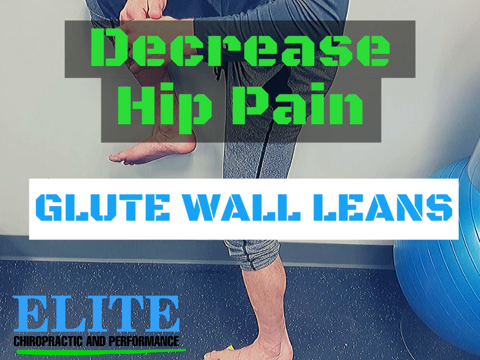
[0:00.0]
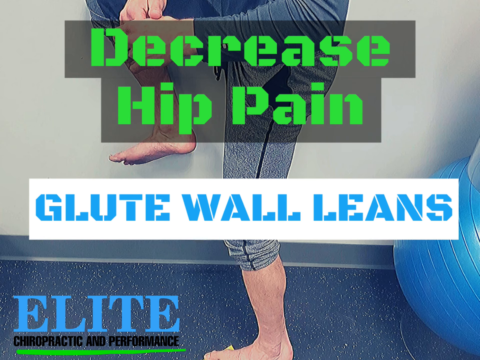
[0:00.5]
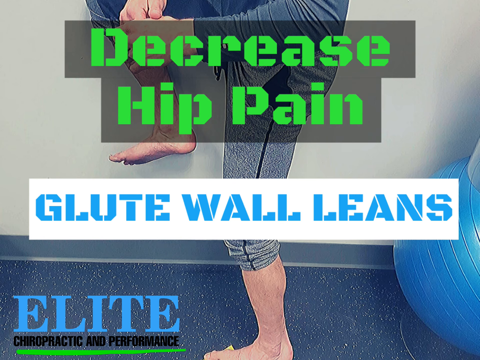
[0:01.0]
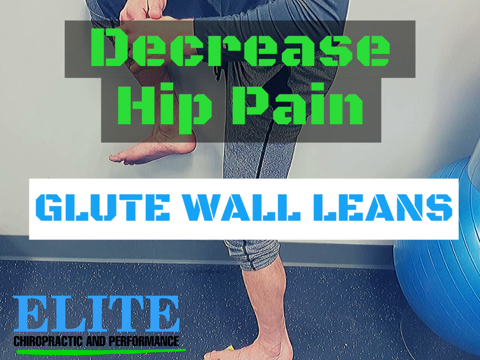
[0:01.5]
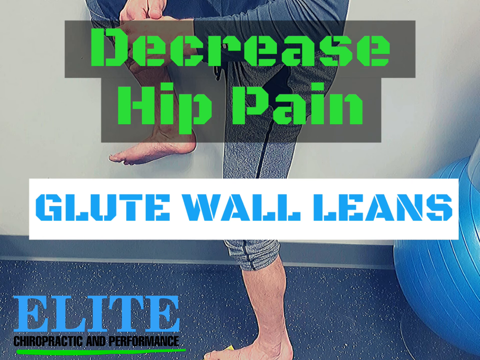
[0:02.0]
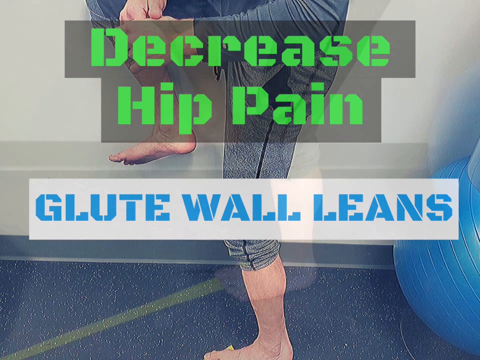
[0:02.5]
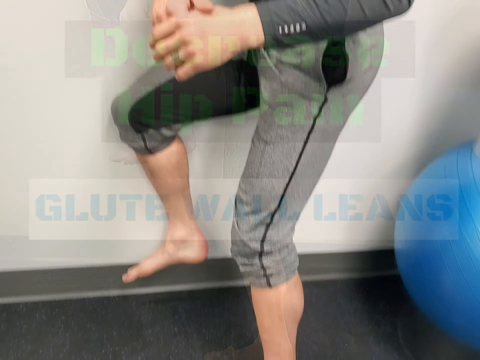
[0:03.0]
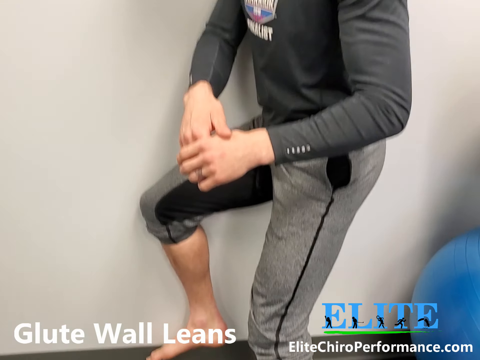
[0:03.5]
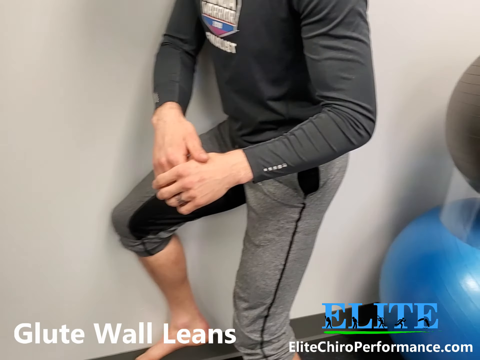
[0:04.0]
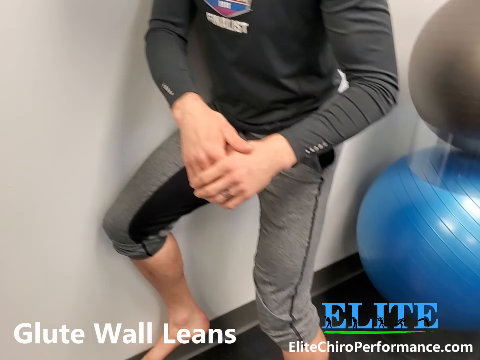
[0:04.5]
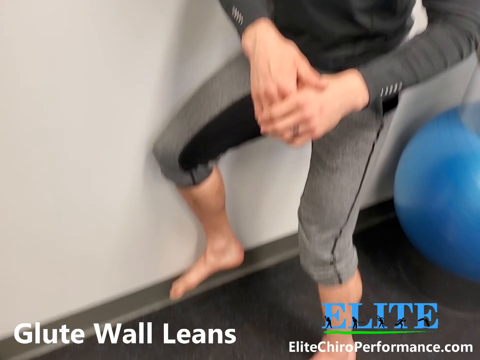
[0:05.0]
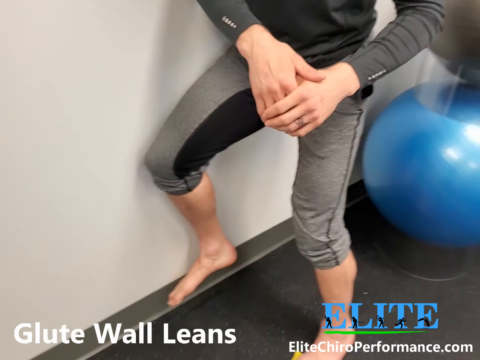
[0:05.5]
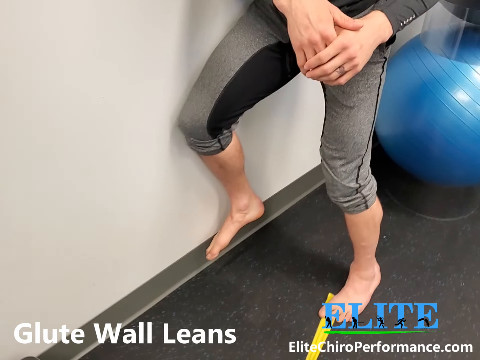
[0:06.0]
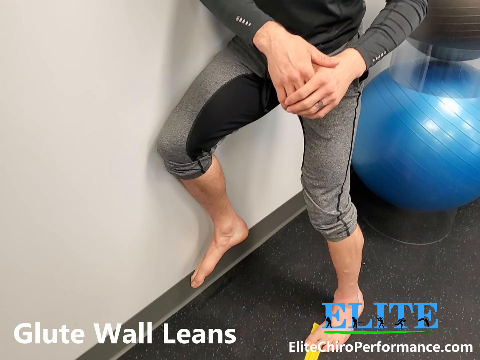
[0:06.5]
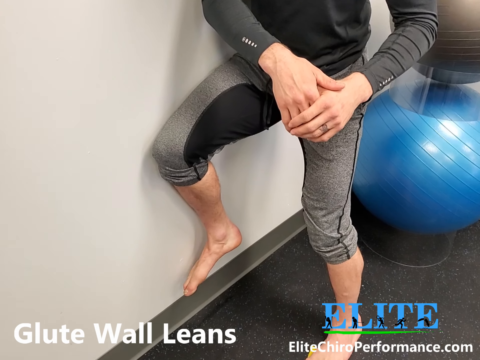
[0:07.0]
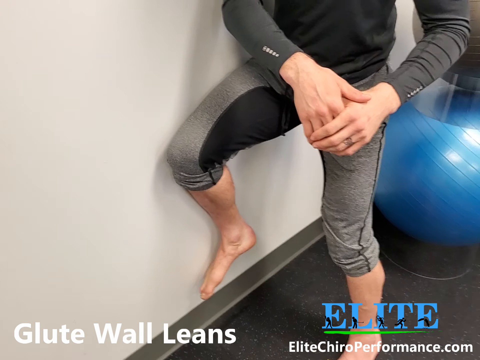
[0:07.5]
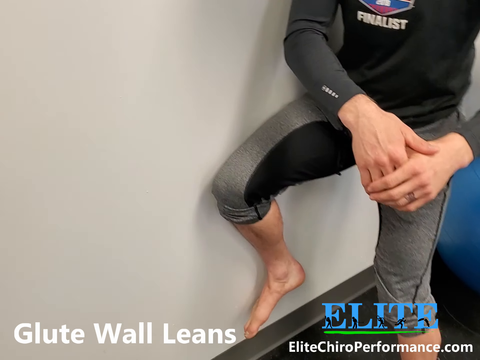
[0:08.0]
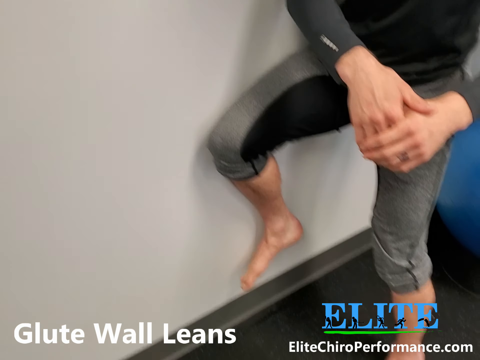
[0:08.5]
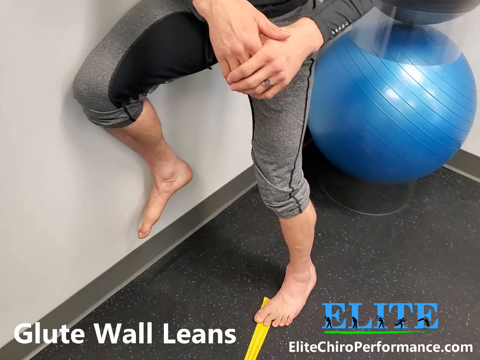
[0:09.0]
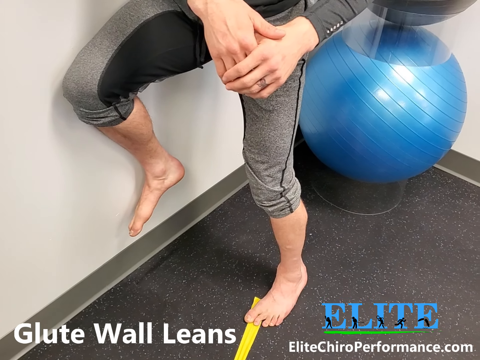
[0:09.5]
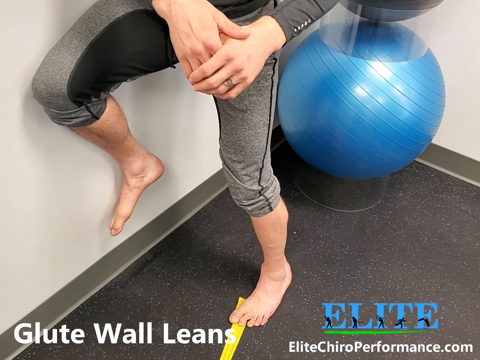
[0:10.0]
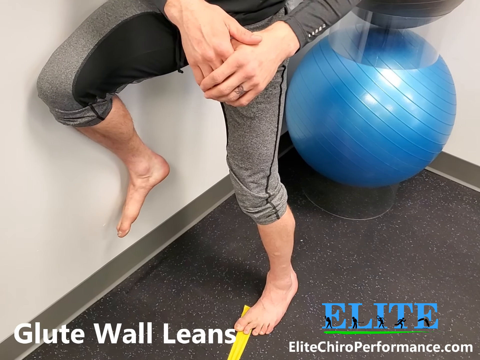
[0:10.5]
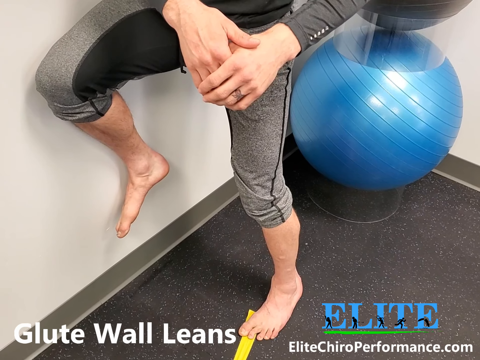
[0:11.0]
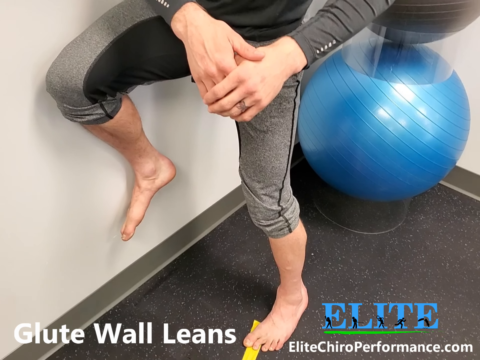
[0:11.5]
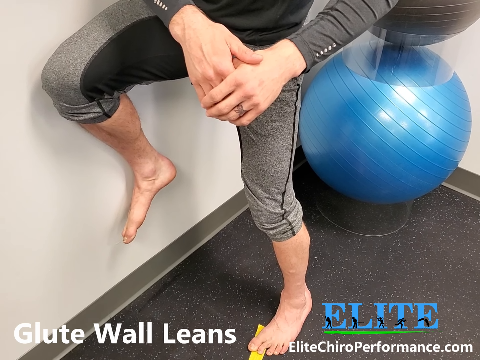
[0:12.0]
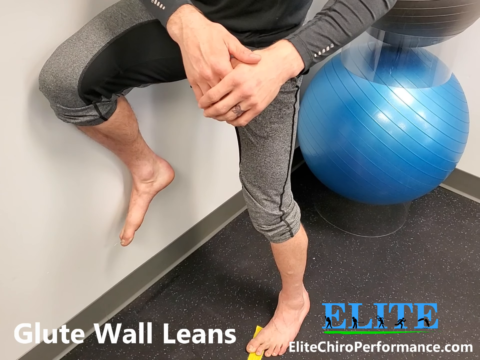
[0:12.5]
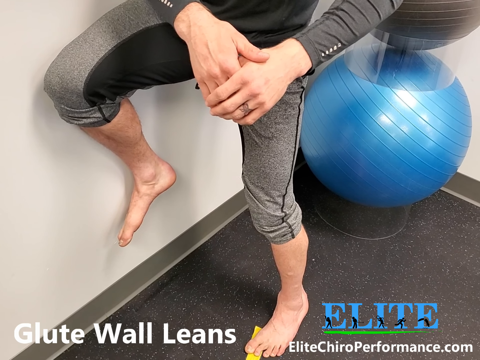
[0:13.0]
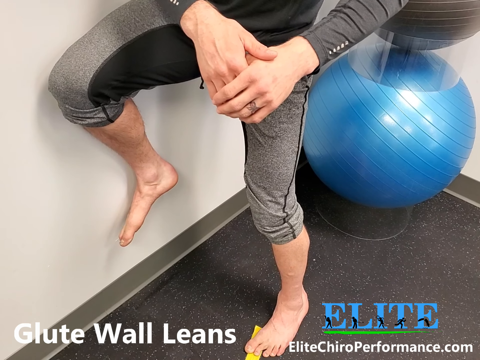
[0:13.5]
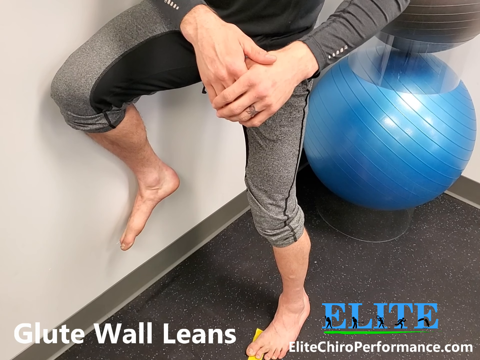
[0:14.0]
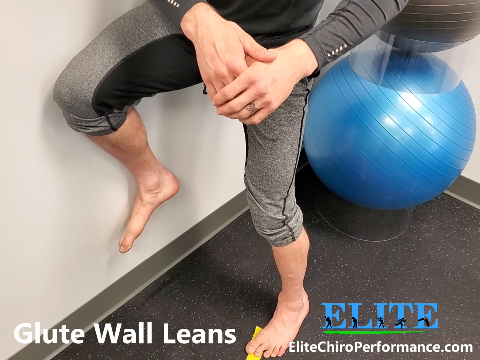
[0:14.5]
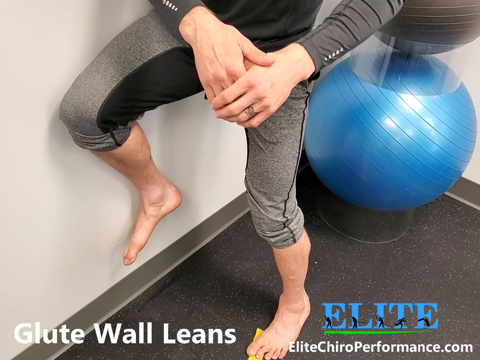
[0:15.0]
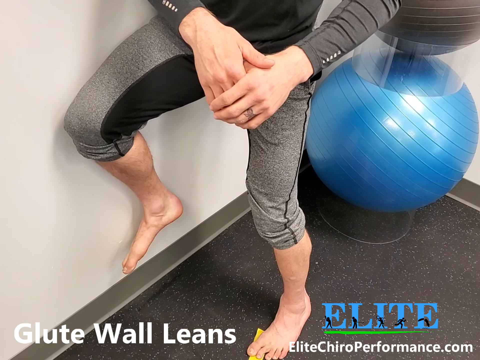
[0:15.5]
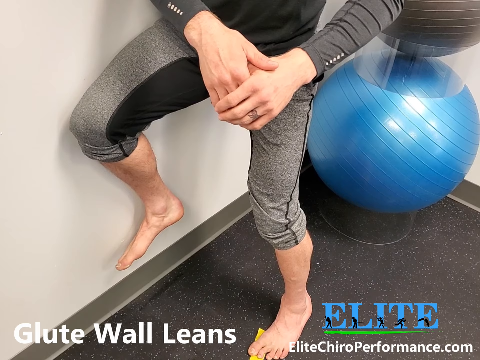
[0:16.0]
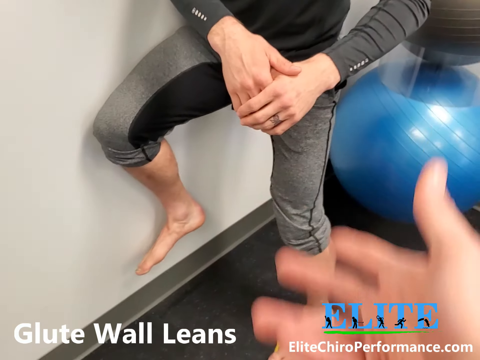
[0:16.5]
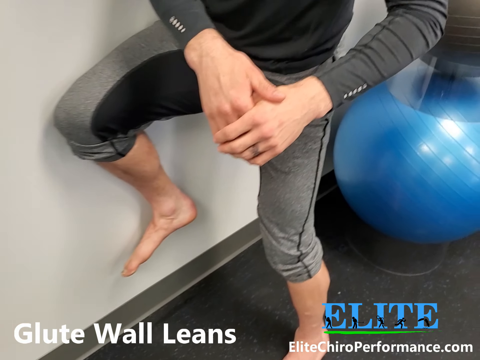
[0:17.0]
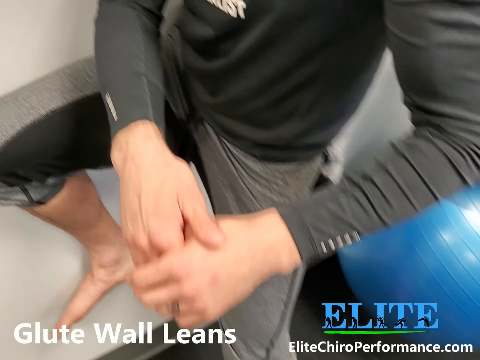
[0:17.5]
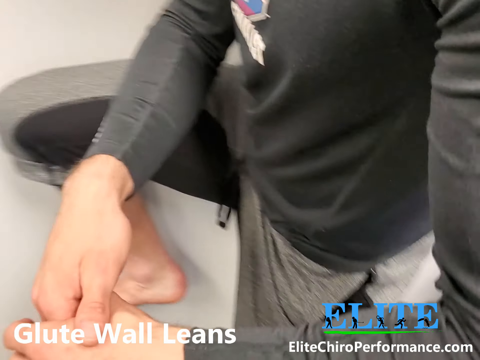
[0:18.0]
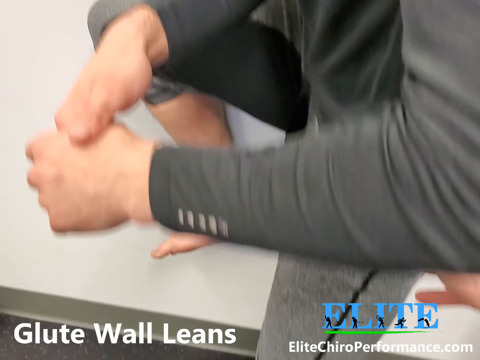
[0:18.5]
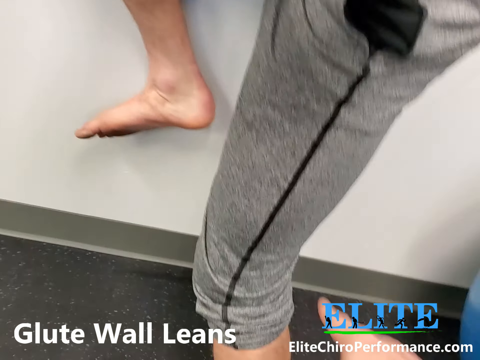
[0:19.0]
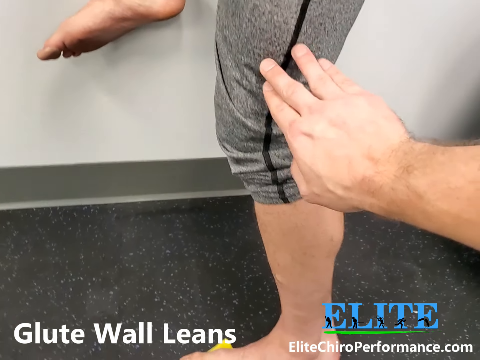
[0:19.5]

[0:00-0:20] The video concerns an exercise related to hip pain. At the beginning, green text at the top reads "decrease hip pain", below it is "glute wall leans", and at the bottom left "elite" appears in blue. It then goes into a video of a person seen from about the waist down. Their hands are clasped together, and they wear a kind of gray outfit with long sleeves and sort of sweatpants rolled up almost to their knees. They are barefoot, with their right leg touching a white wall and their knee up on the wall as well, and they keep moving it up a little bit along the wall. The camera moves from the left and then to the right. A big blue exercise ball is behind the person, and the ground is black. For just one second a hand comes up in the bottom right corner, kind of gesturing towards the person doing the exercise. The camera then kind of zooms in and moves closer to the person, and the hand points to the person's left leg and sort of touches the side of their knee with the right hand.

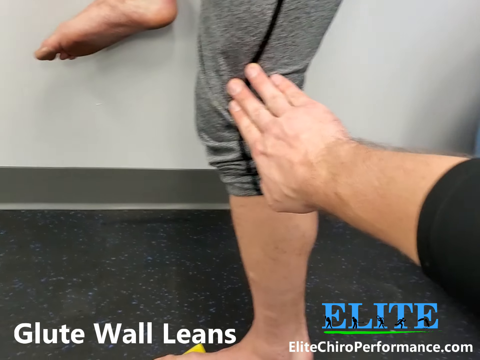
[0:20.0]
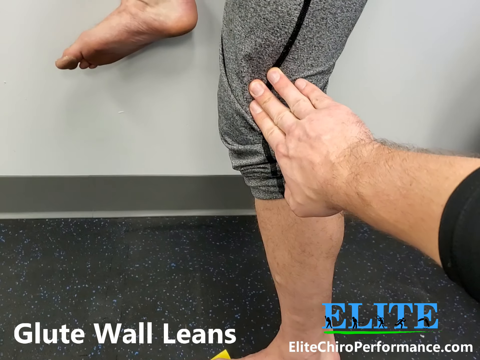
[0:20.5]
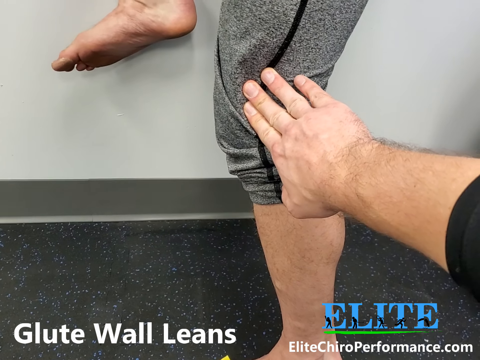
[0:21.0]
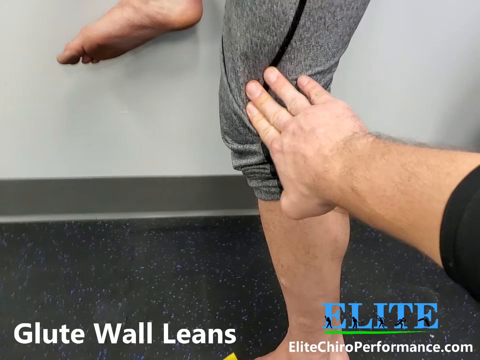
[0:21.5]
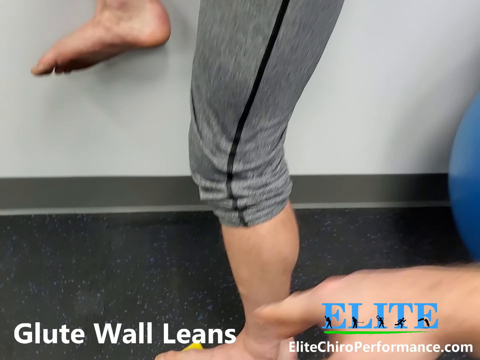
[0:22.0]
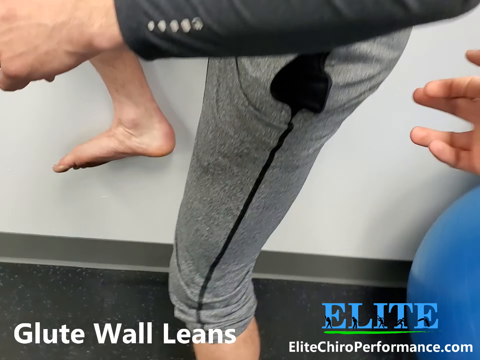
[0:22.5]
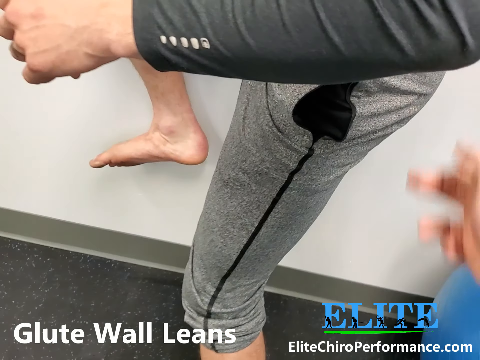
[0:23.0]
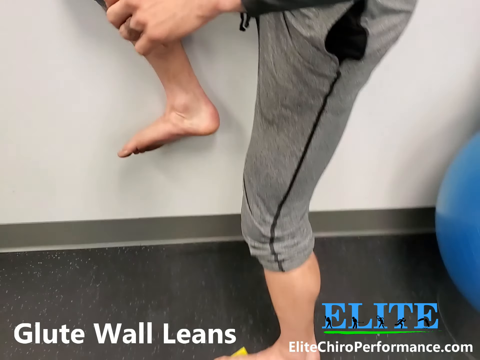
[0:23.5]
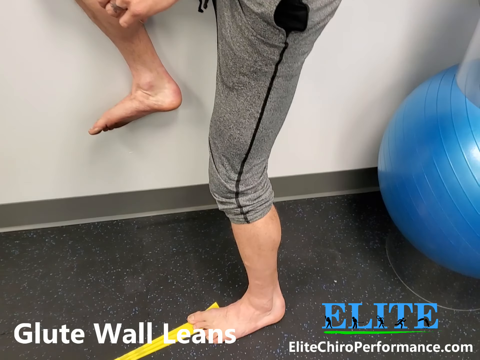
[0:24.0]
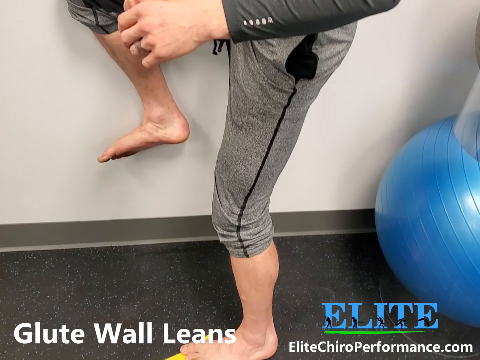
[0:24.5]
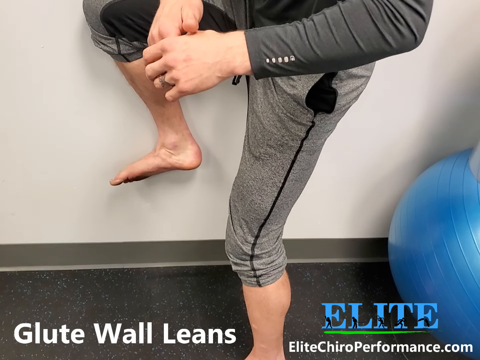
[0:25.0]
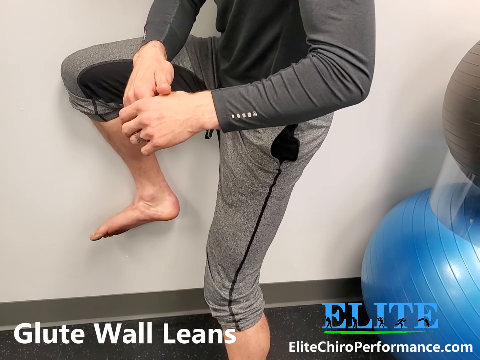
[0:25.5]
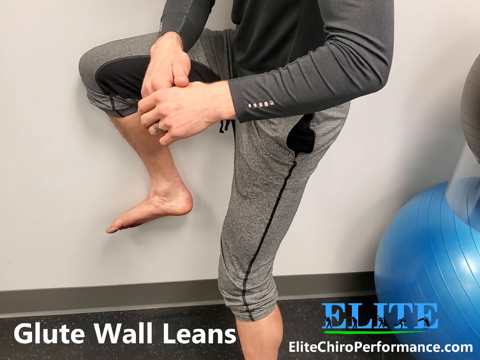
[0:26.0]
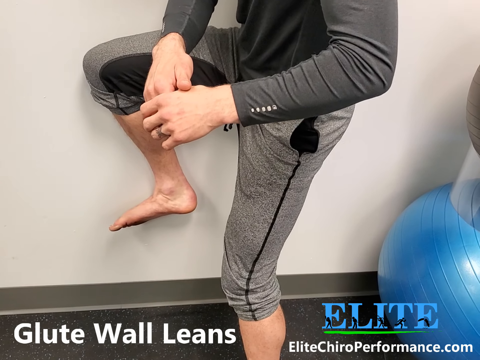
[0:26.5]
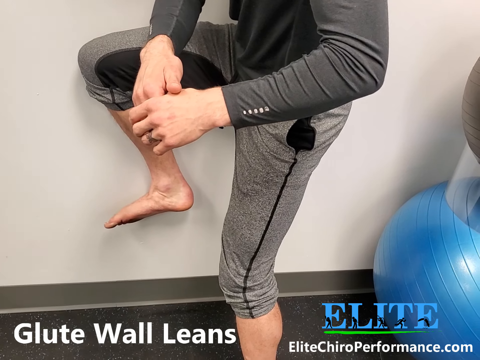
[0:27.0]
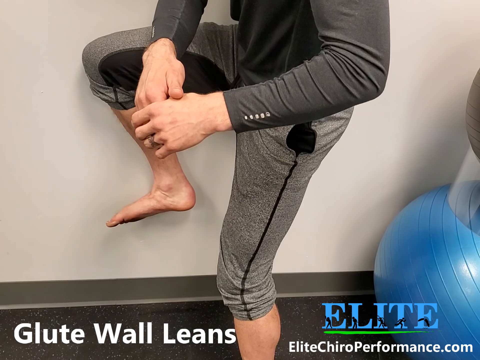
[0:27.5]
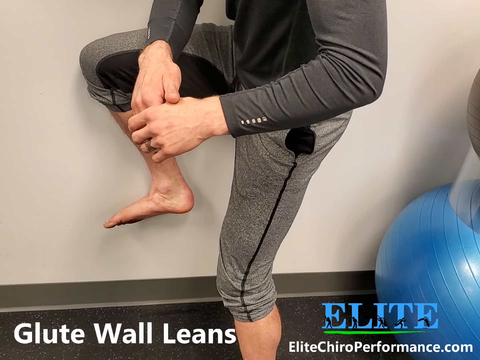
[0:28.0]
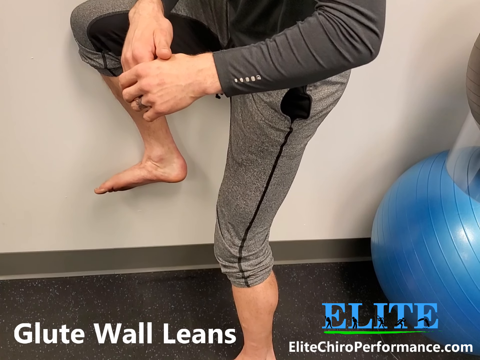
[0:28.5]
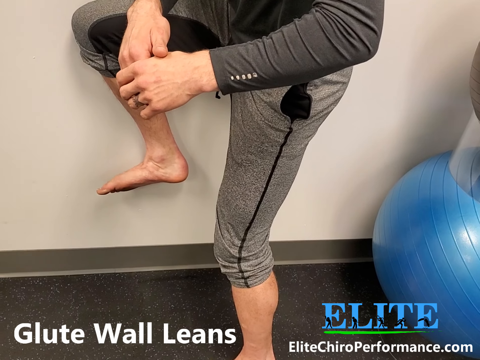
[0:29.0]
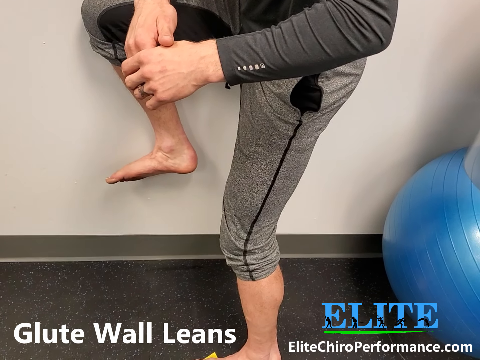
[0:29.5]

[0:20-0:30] A close-up shows the right hand of the person holding the camera resting on sort of the side of the other person's left knee, with that person's right foot kind of visible in the top left corner. The hand comes off the leg, the camera kind of pans up, and the hand sort of touches the person's back a little with a finger. More of the person against the wall becomes visible: they wear gray sweatpants and a black kind of shirt, with their hands clasped together. The camera sort of zooms out again, showing the person with their right knee up against the white wall and a blue exercise ball in the bottom right. In the bottom left, white text reads "glute wall leans", and on the right "elite" appears in blue text.